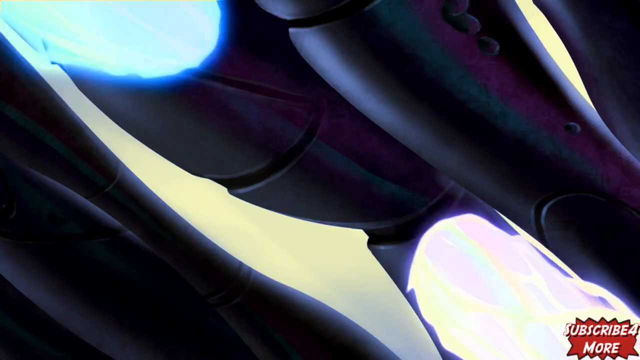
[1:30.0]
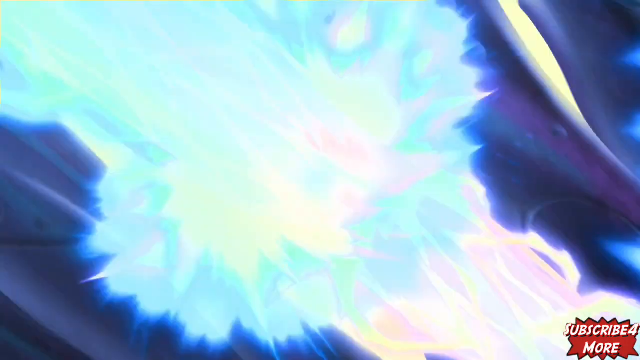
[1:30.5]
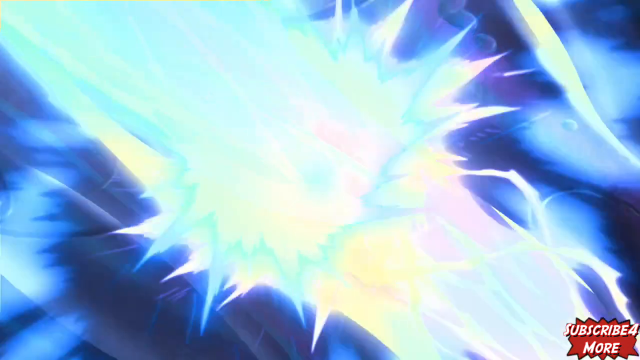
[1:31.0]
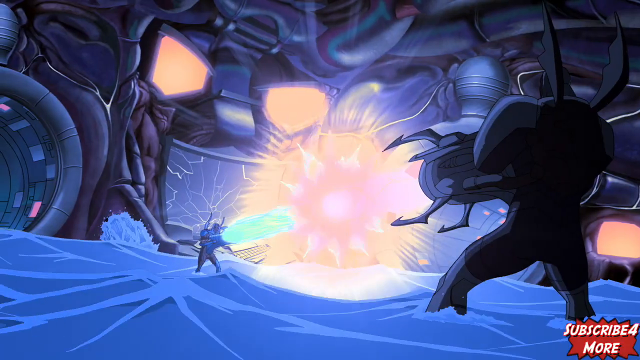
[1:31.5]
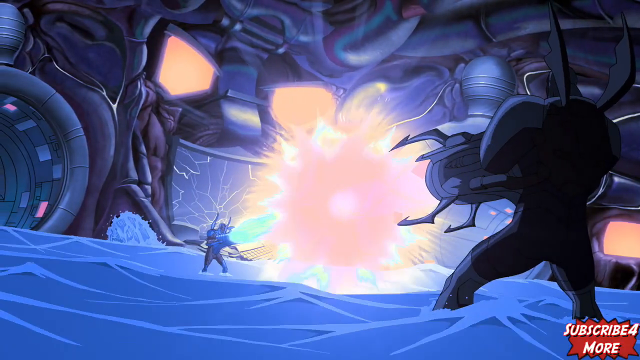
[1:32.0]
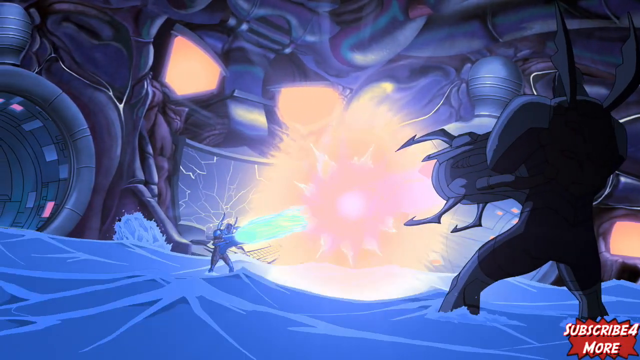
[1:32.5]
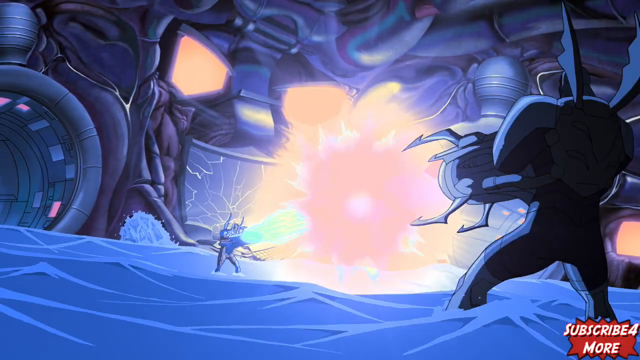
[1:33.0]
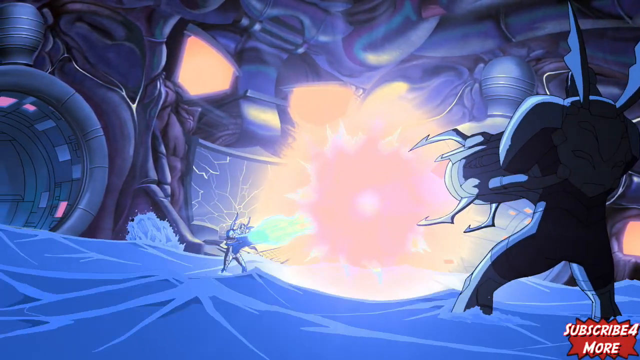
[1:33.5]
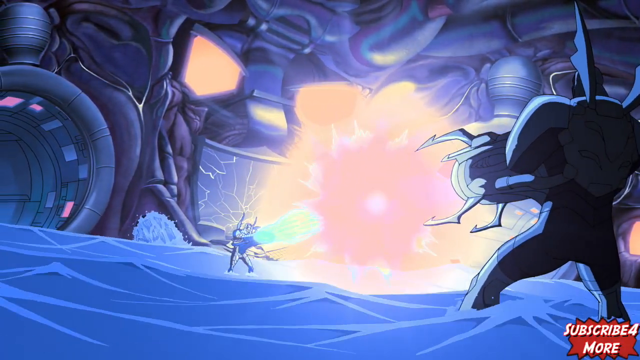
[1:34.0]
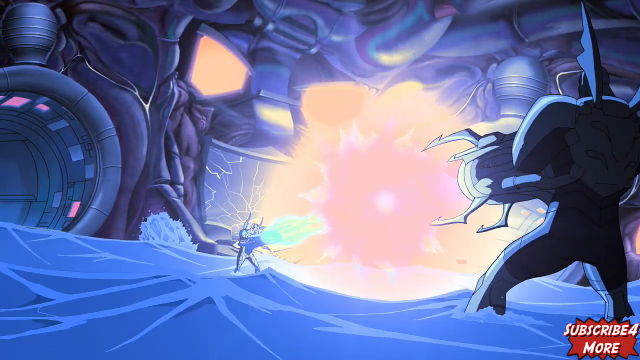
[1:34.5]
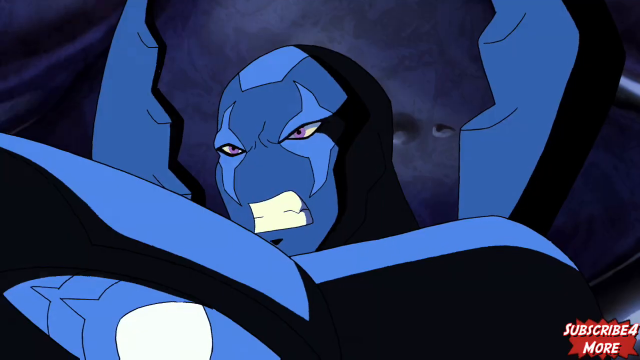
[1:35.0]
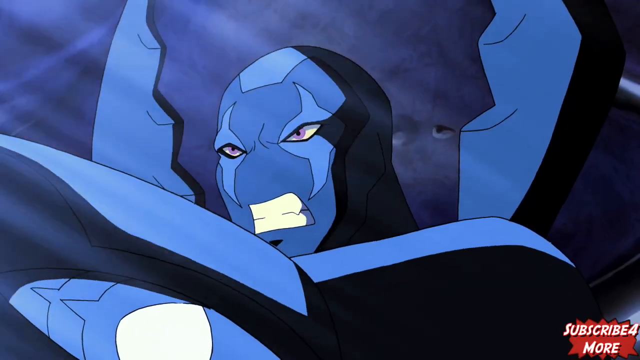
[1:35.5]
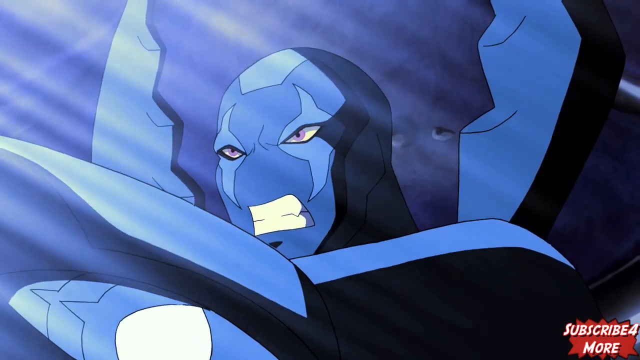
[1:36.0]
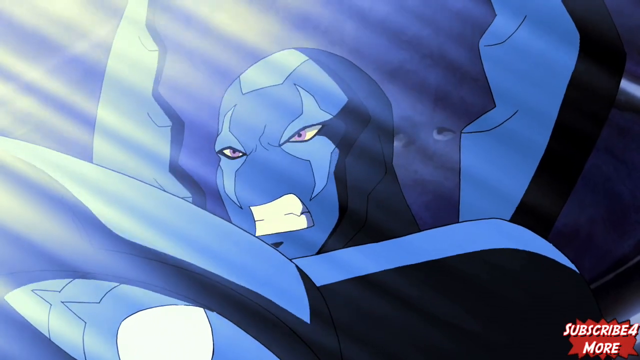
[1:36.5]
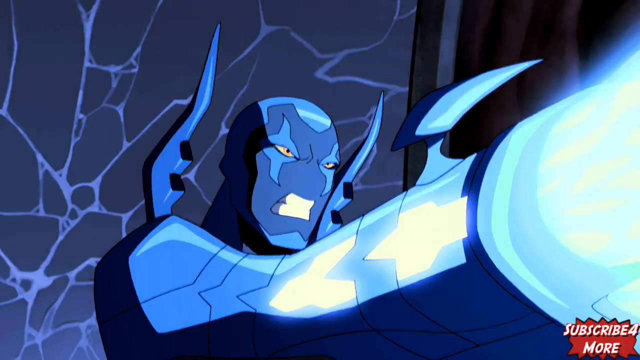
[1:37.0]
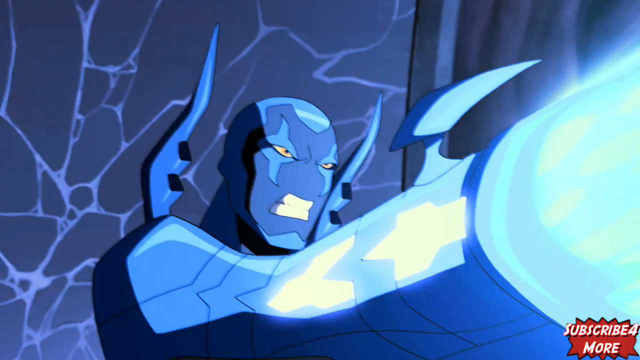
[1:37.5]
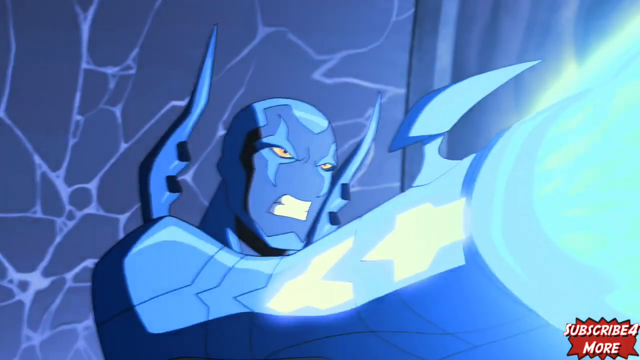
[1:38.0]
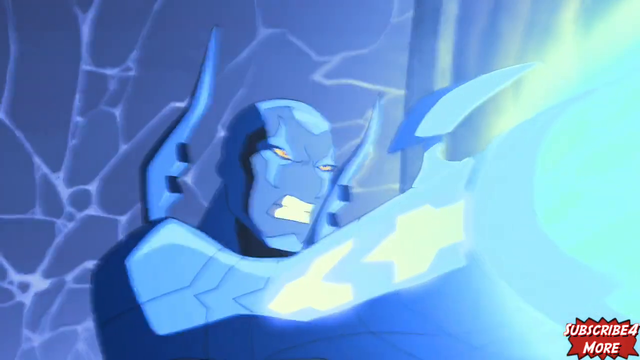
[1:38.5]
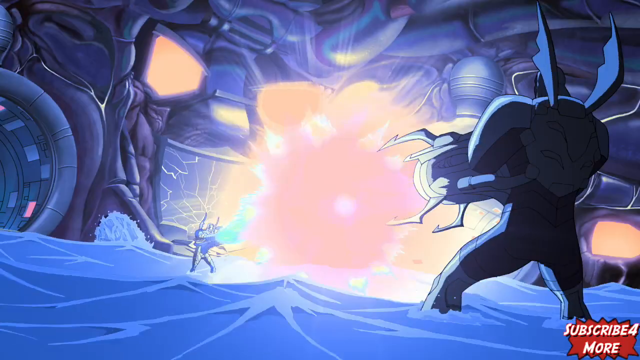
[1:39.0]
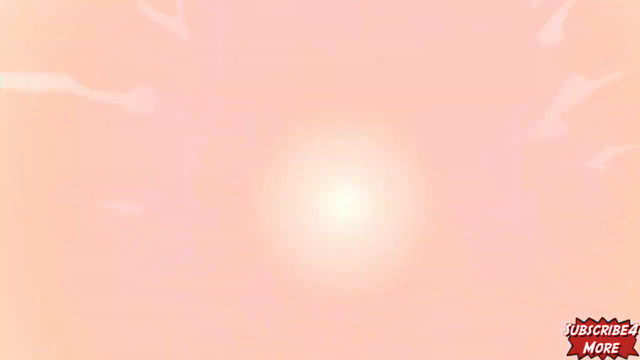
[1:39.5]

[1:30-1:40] The view is from behind and to the side of the black creature. Four daggers are visible around his laser gun, and water rushes below and comes out of an opening behind the blue one. The colliding lasers are a peachish color and pulsate to show how powerful they are. Both the black one and the blue one grit their teeth. The laser brightens and grows larger and larger until it flashes across the screen. The black one is thrown against the wall and crashes into it. In the bottom right corner, a red jagged rectangle says "subscribe for more". The cartoon is very futuristic; the creatures look like robots, with no ears and no nostrils, just slants for eyes and an opening for teeth.